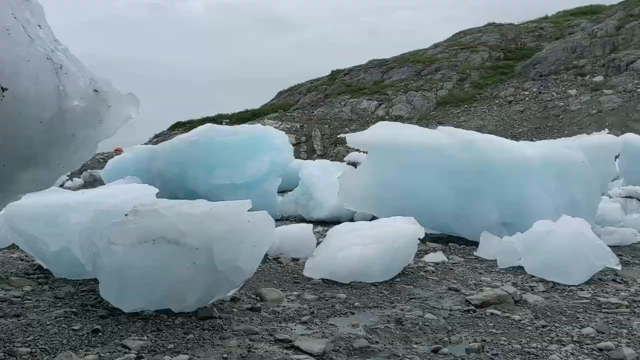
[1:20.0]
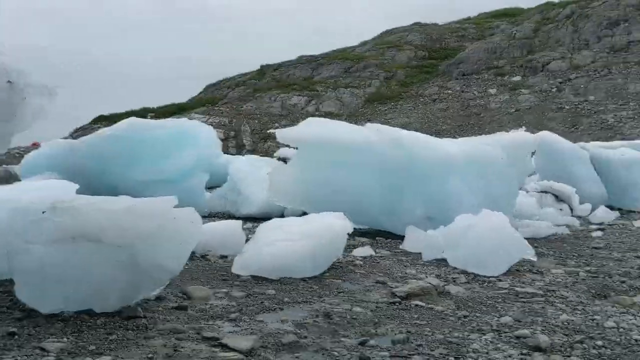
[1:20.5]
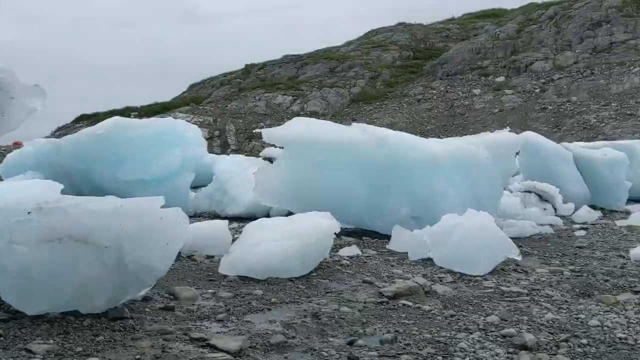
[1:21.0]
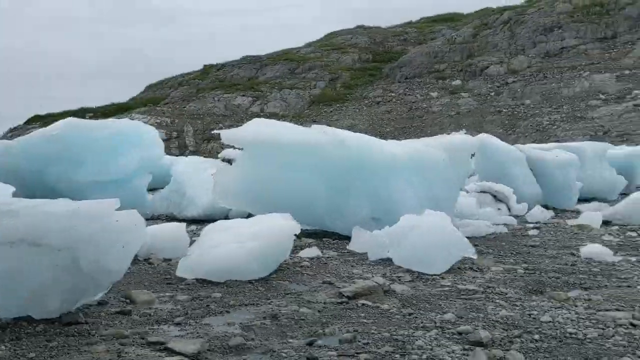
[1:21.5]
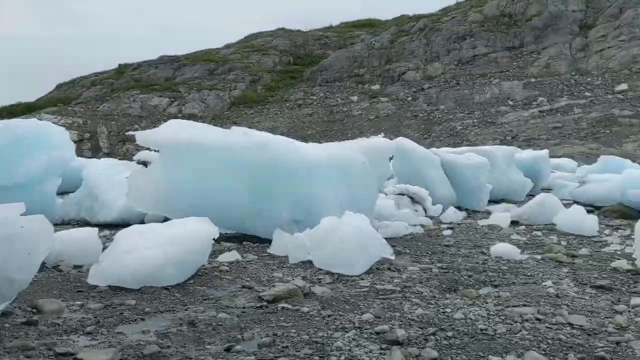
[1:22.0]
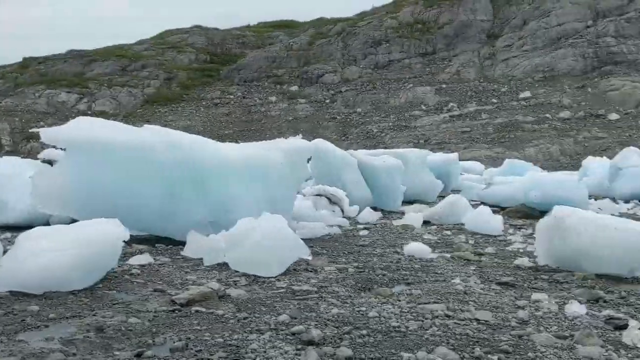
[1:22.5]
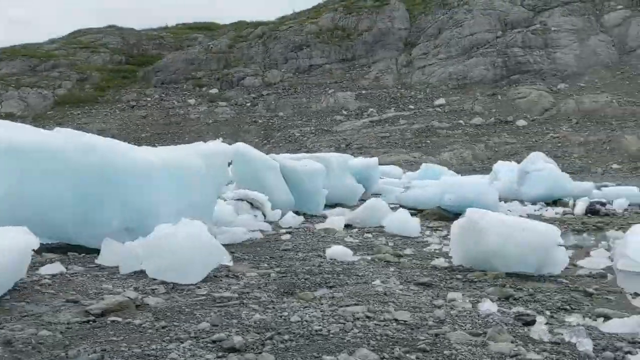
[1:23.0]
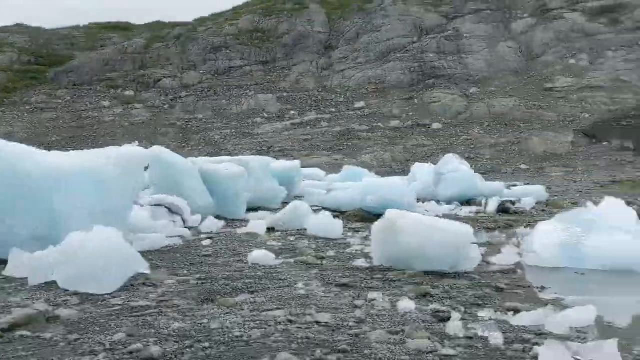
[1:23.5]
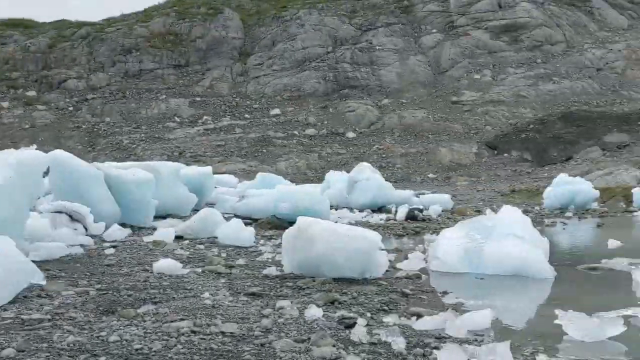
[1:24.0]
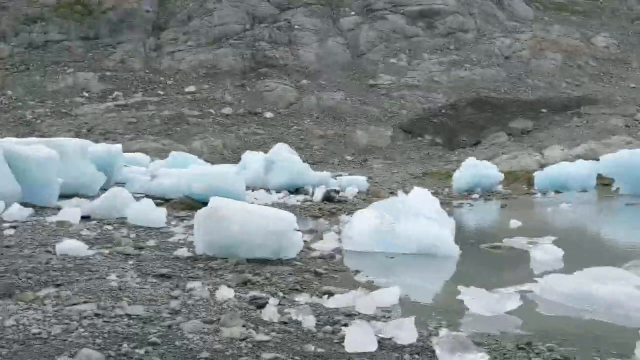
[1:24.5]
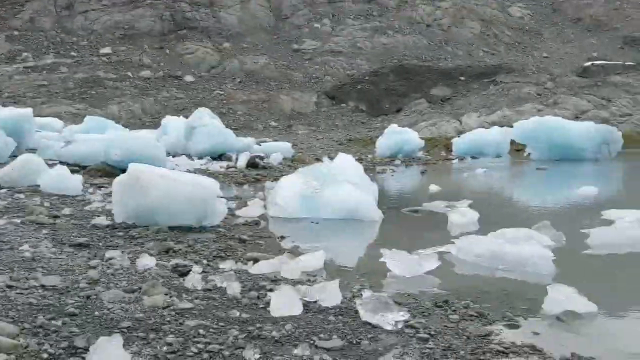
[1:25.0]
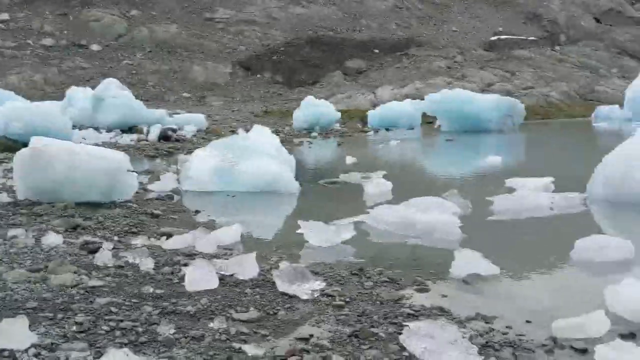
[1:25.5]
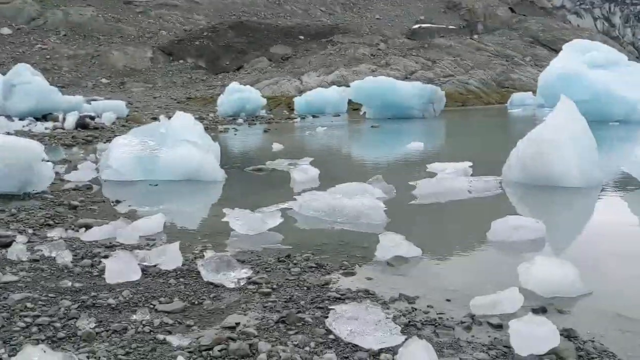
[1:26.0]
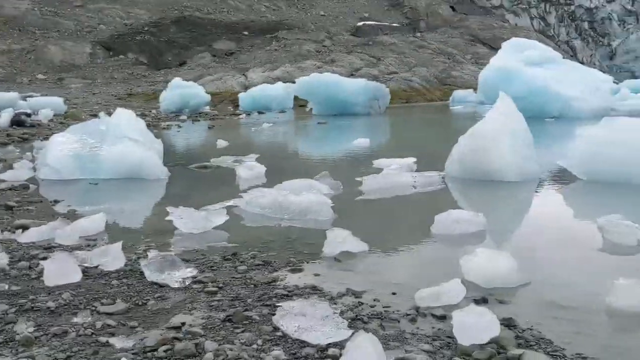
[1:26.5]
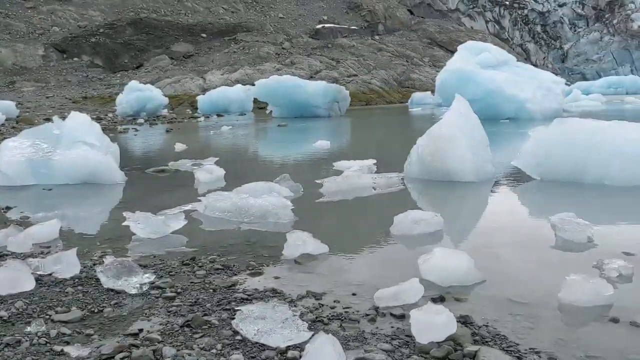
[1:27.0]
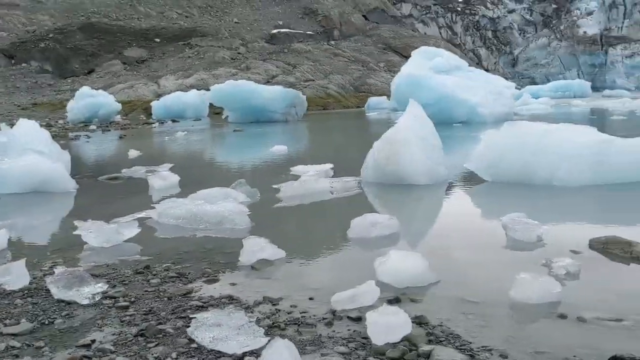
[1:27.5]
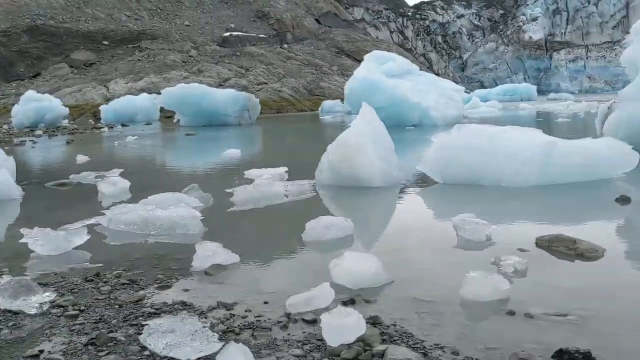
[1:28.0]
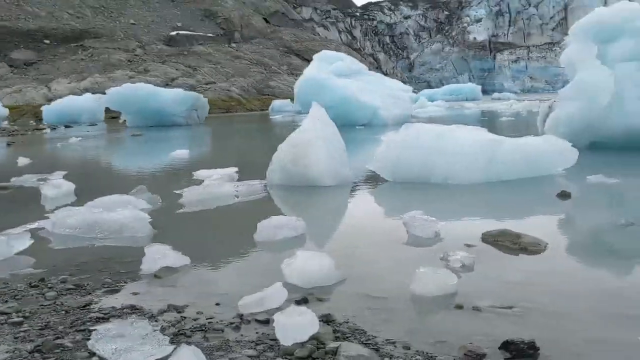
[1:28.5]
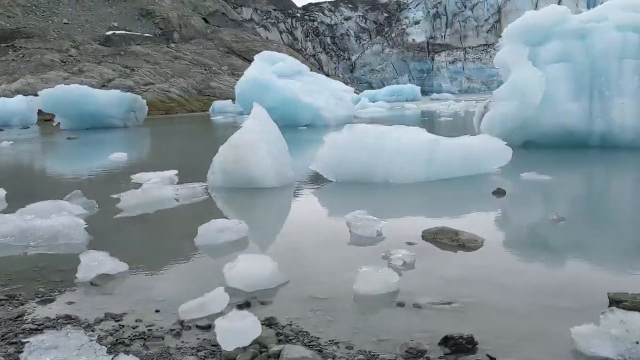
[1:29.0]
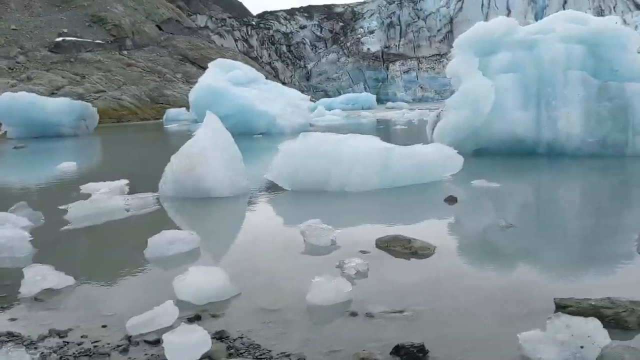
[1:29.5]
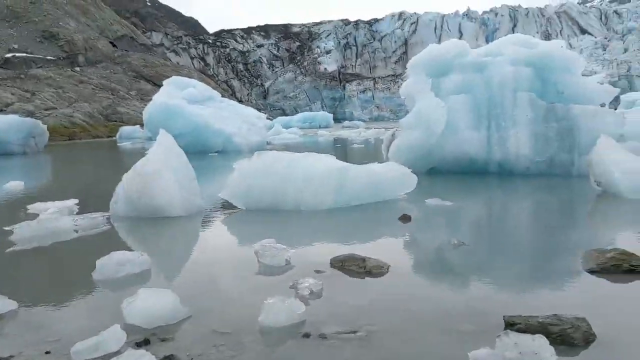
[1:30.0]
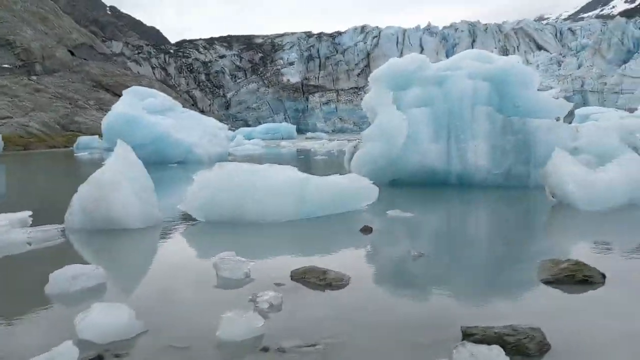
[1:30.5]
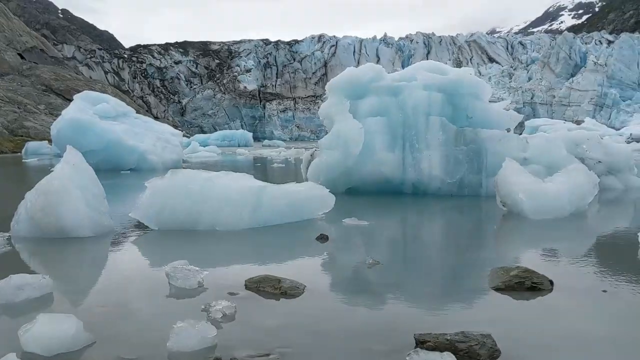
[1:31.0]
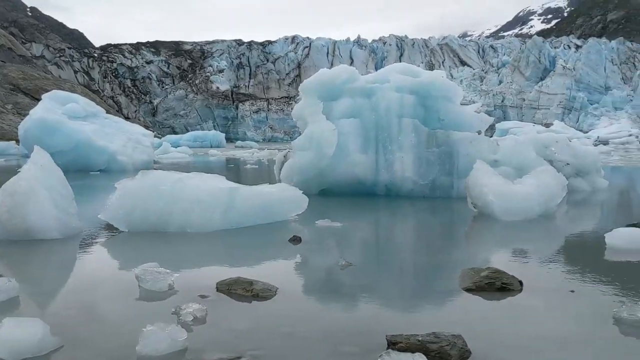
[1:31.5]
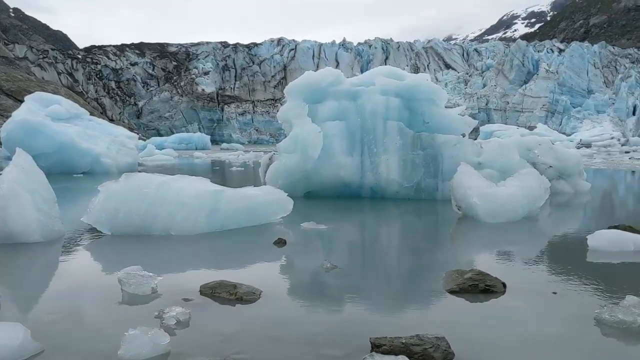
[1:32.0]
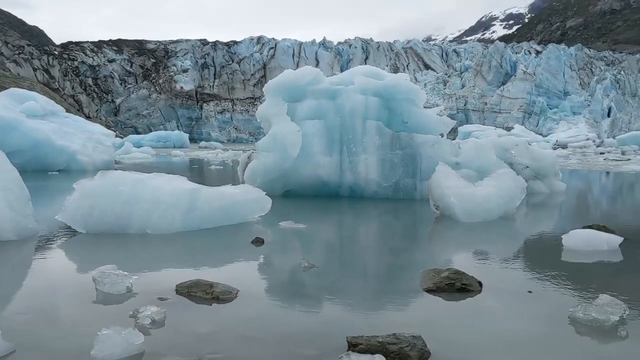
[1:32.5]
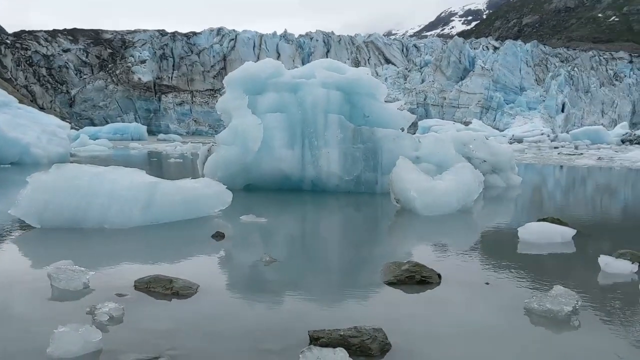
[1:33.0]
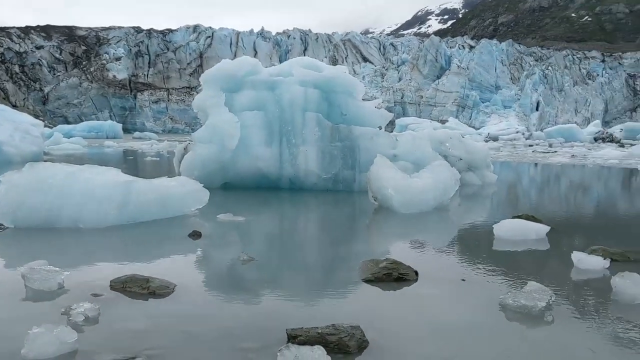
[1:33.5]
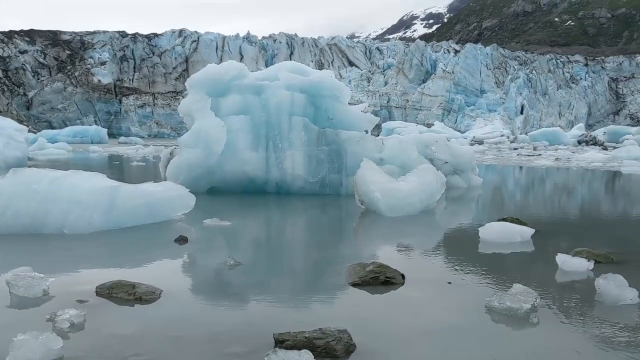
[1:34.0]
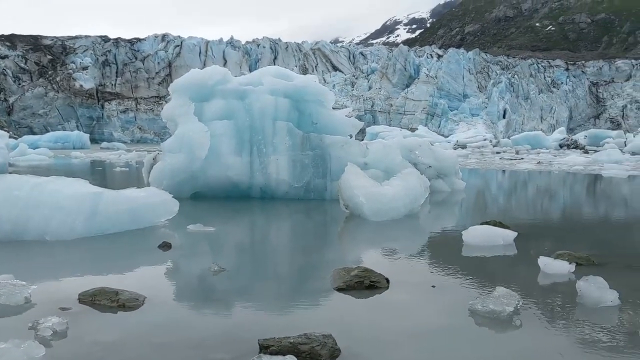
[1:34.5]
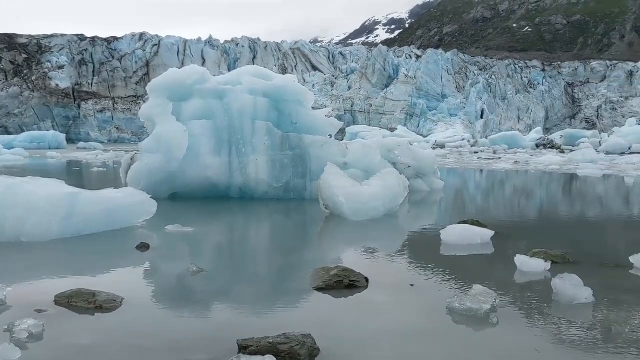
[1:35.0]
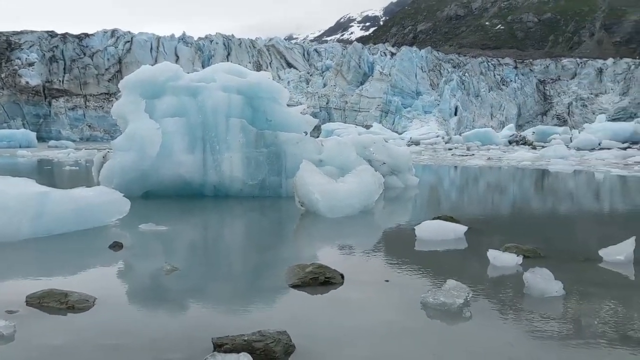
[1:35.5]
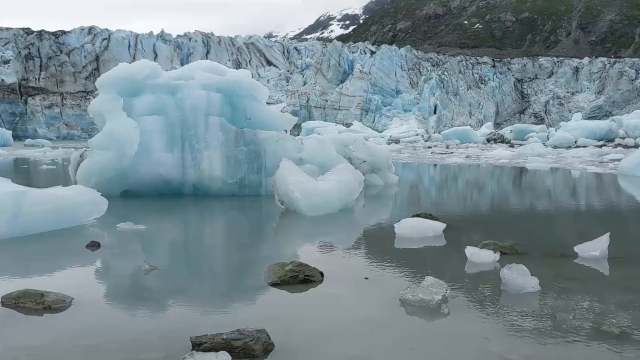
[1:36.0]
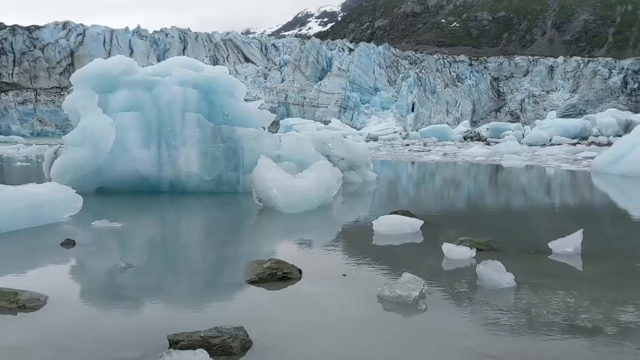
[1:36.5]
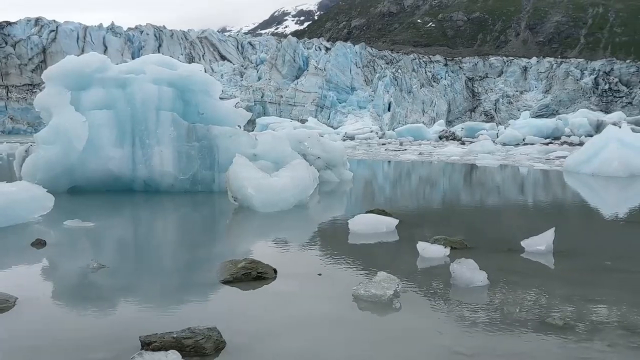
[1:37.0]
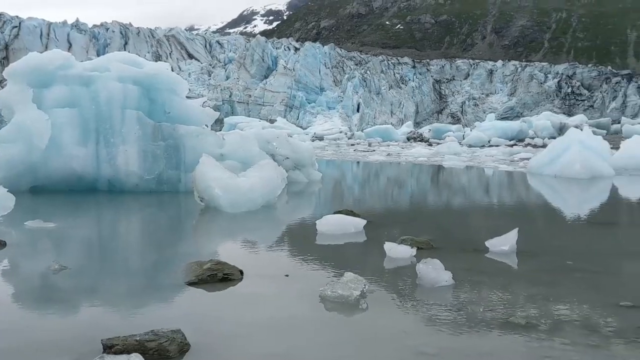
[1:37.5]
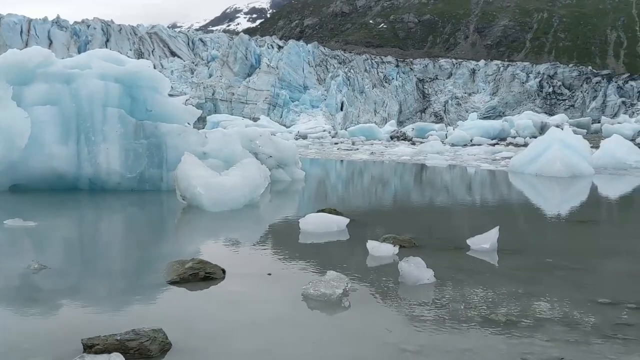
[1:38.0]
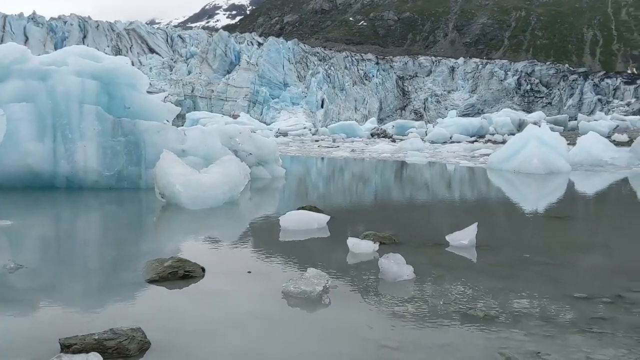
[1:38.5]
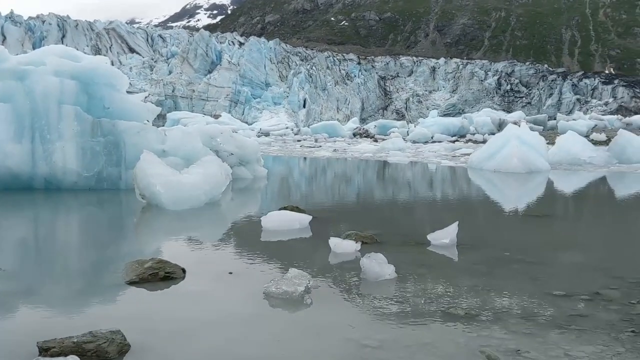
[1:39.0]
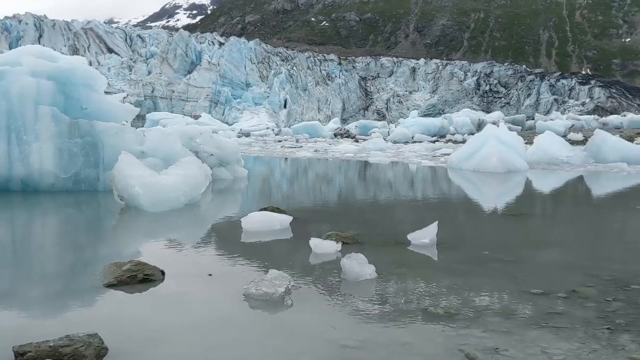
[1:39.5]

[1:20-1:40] The camera continues panning to the right along the isolated blocks of ice at the edge of the glacier, ranging in size from small ones to some quite big ones, all jagged on the edges and sitting there, slowly melting. In the background is a cliff of light grey, rugged, fractured rock with just a little greenery on top. Panning further right, the camera shows a very shallow, muddy pool of grey, silty water holding some very translucent melting ice and some bigger light blue chunks. Behind it is what looks like a bigger wall of dirty-coloured ice, possibly the front end of the glacier. The camera pans around the melted pool where the glacier comes to an end, with the cliffs in the background.